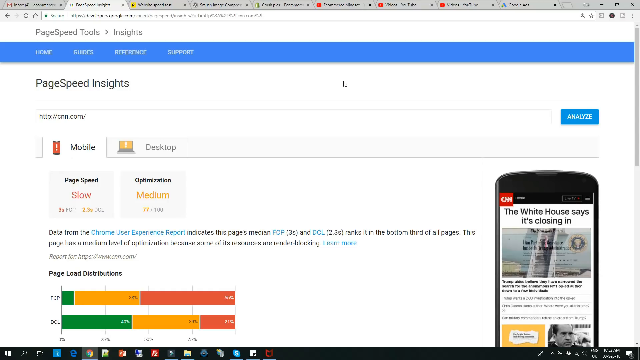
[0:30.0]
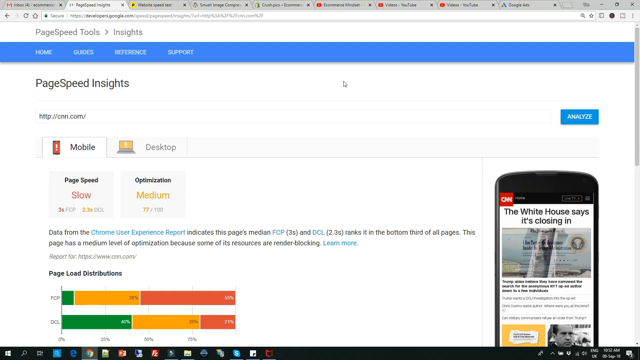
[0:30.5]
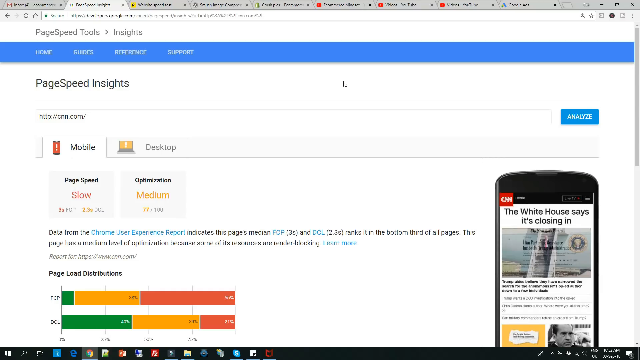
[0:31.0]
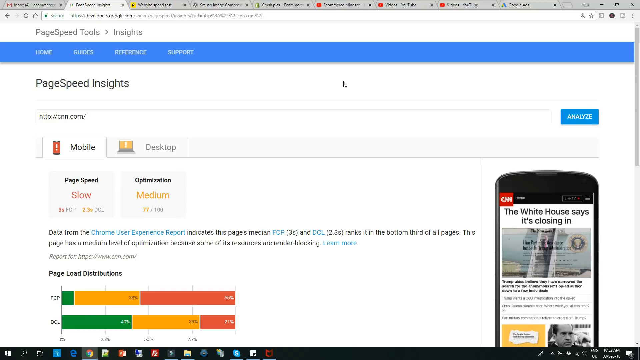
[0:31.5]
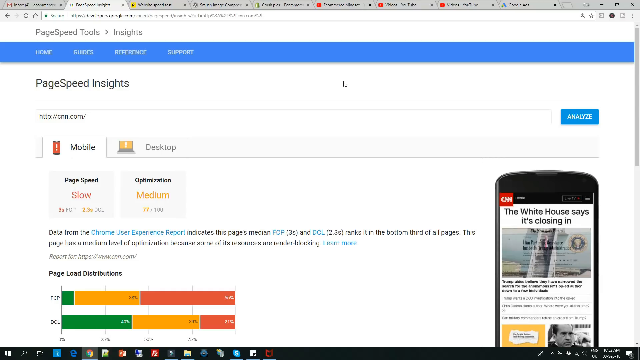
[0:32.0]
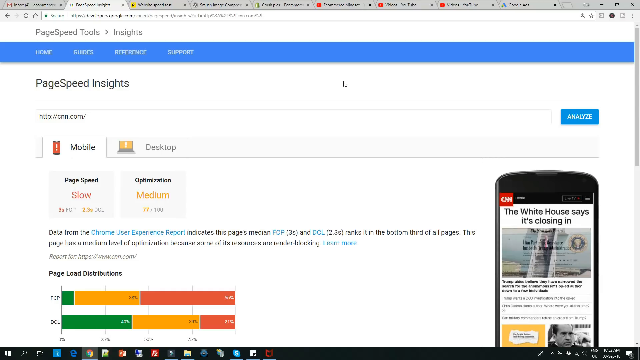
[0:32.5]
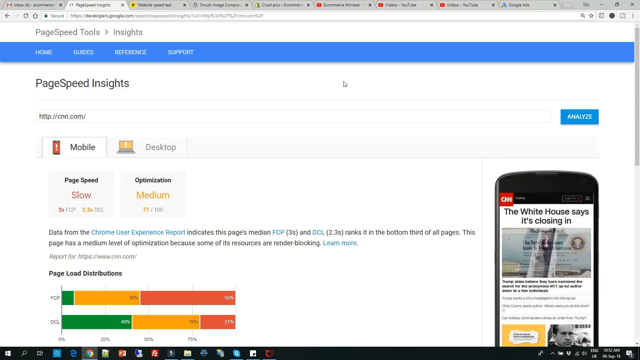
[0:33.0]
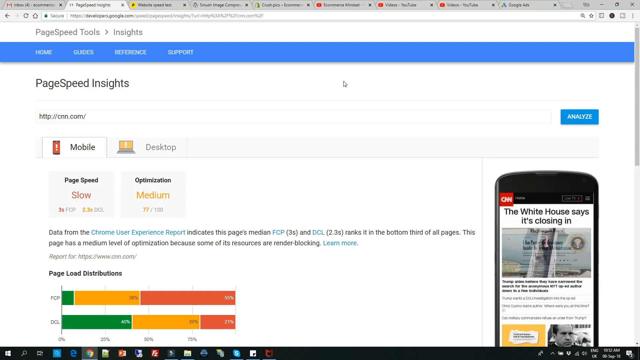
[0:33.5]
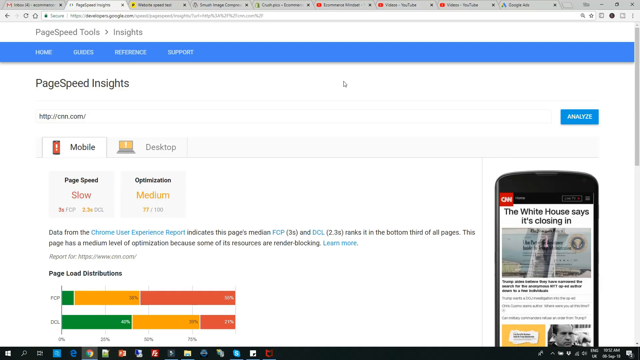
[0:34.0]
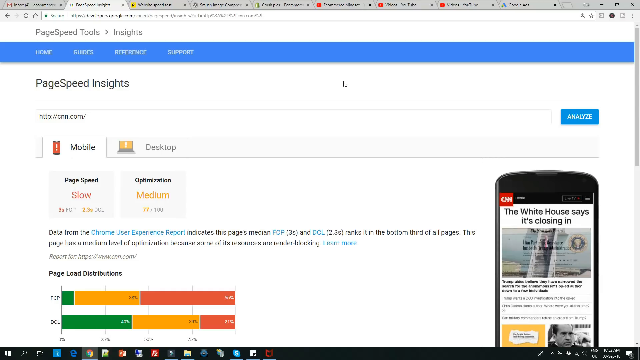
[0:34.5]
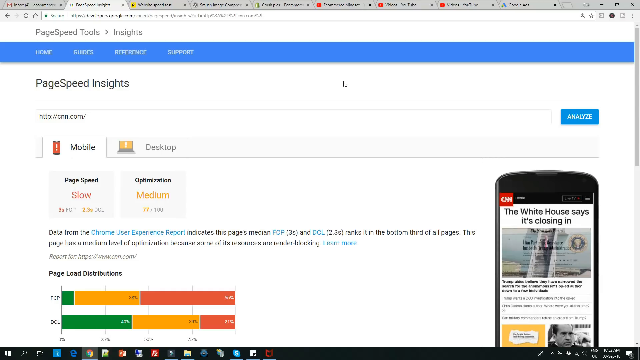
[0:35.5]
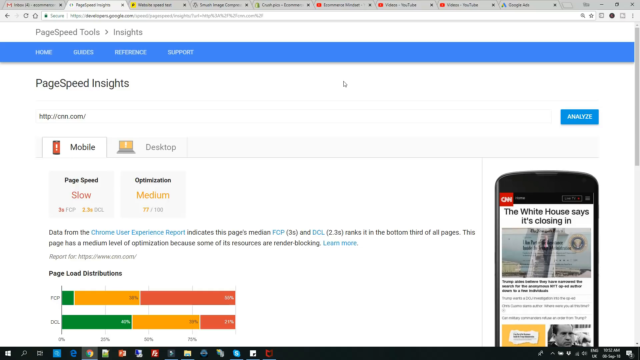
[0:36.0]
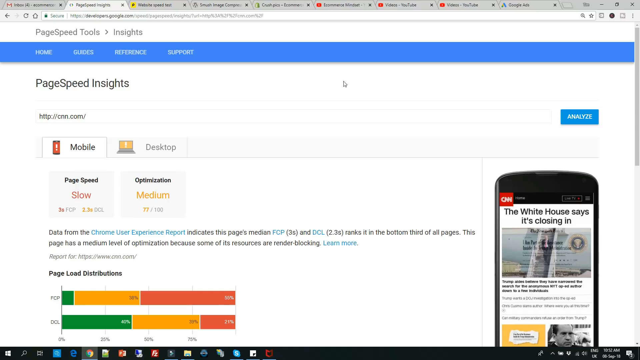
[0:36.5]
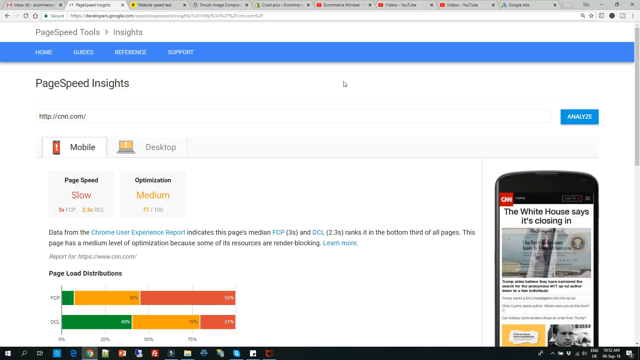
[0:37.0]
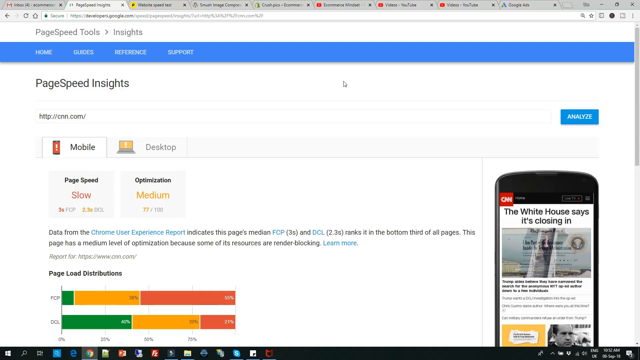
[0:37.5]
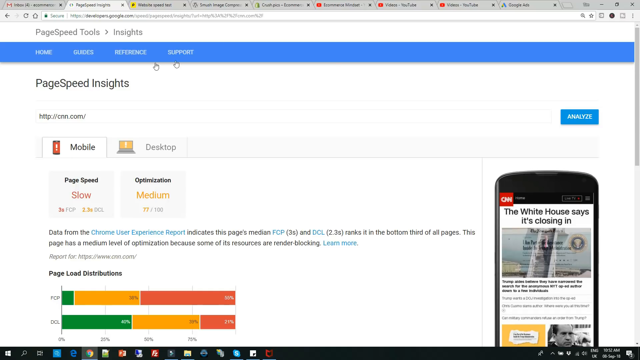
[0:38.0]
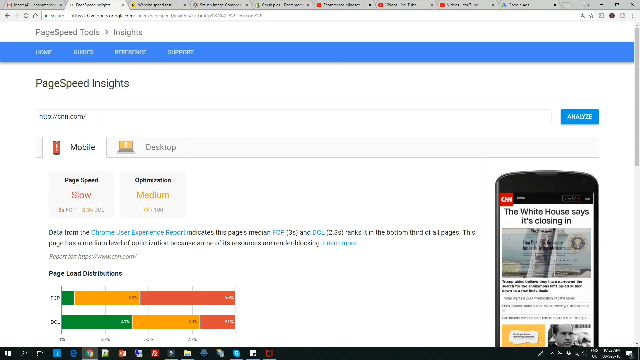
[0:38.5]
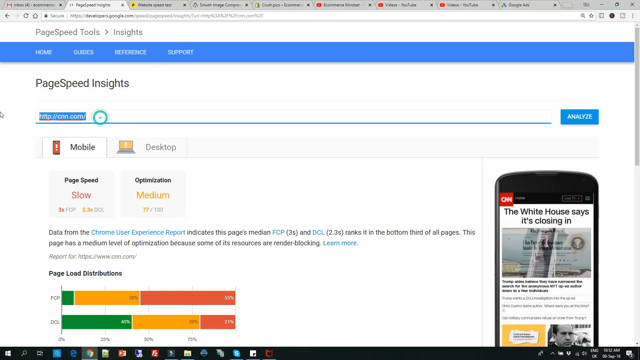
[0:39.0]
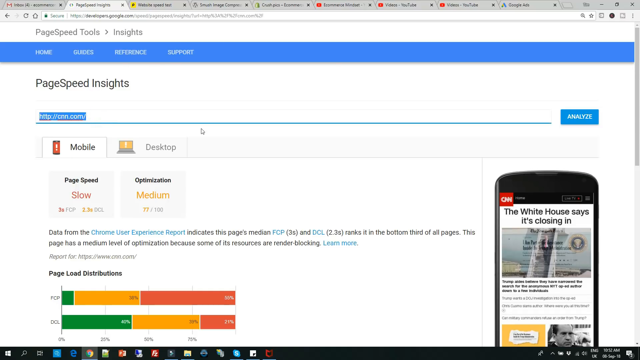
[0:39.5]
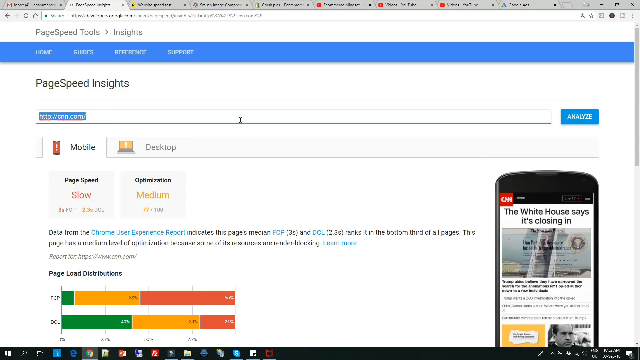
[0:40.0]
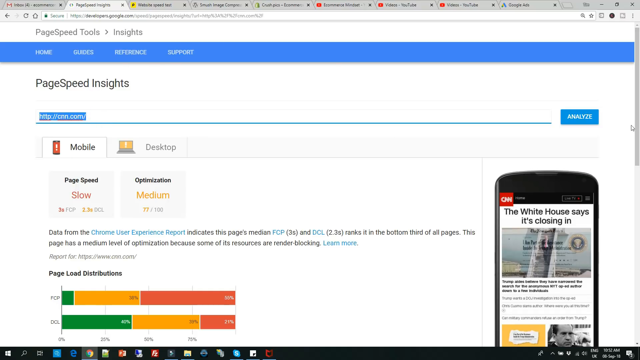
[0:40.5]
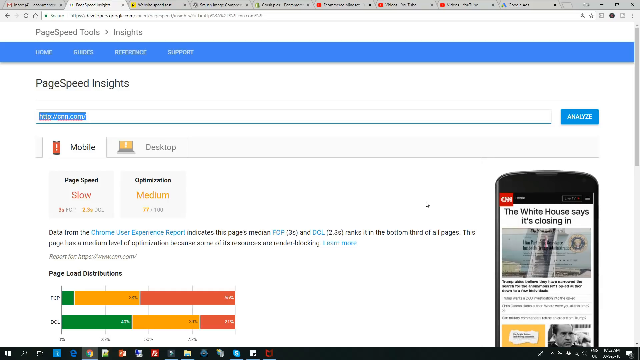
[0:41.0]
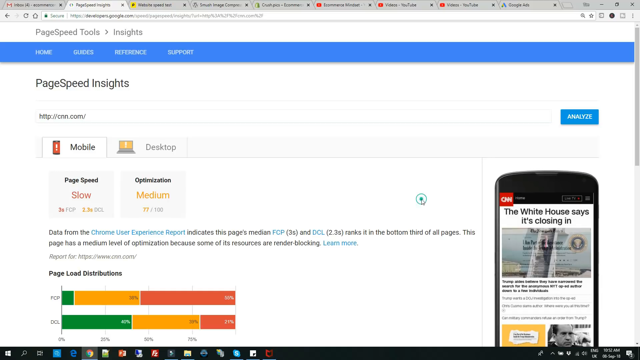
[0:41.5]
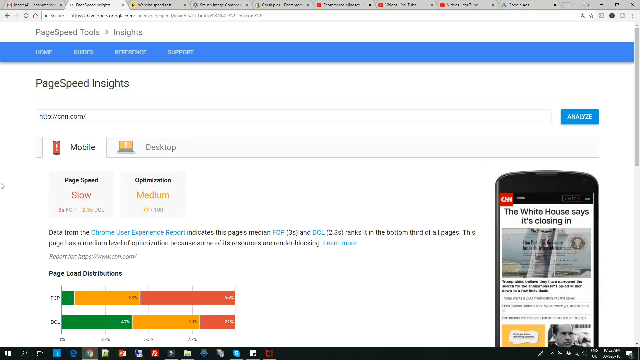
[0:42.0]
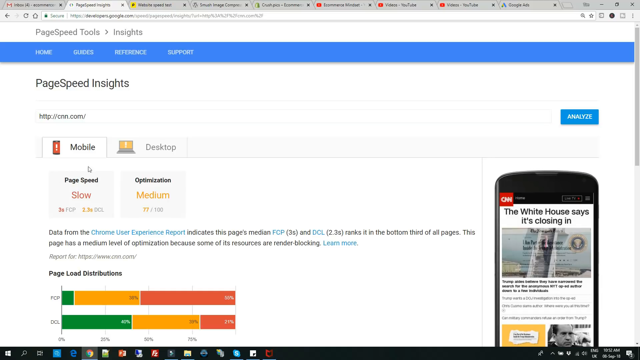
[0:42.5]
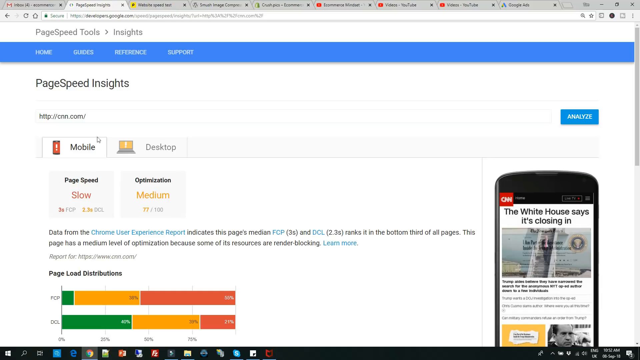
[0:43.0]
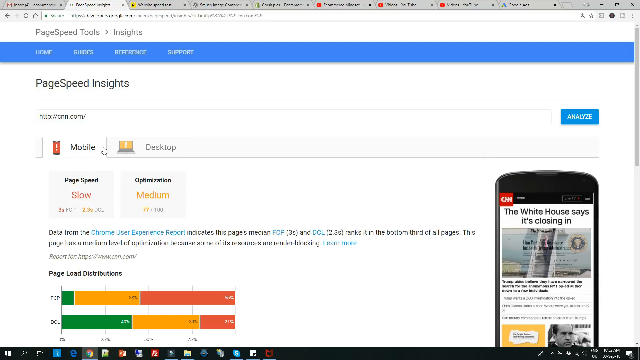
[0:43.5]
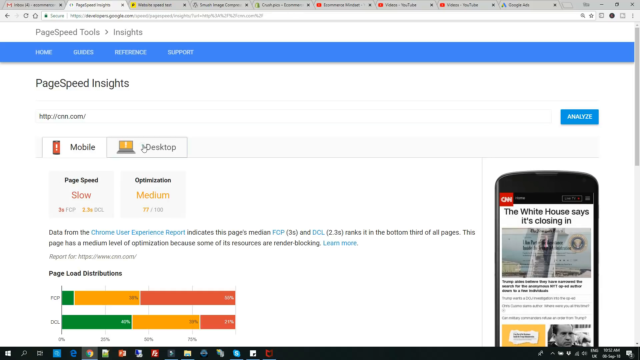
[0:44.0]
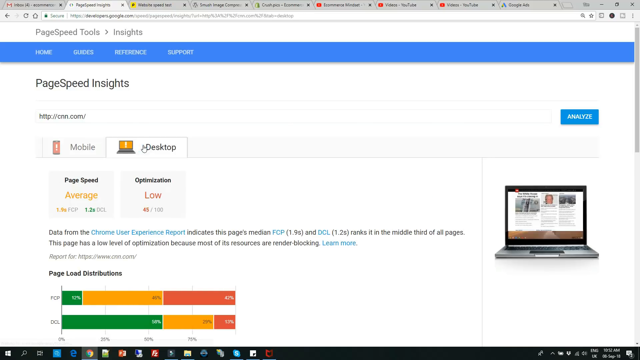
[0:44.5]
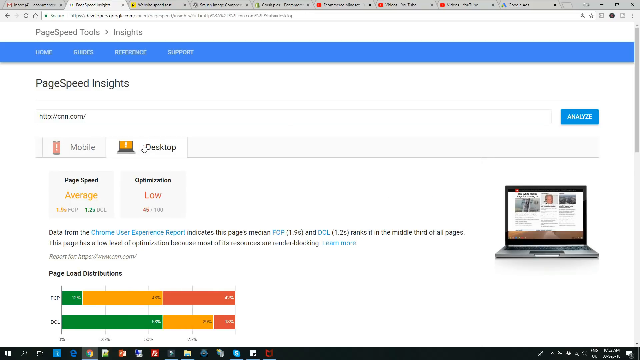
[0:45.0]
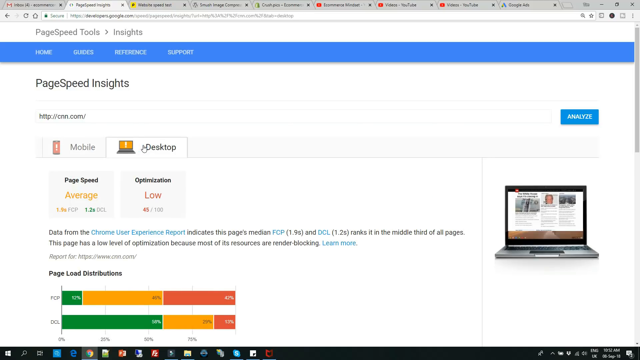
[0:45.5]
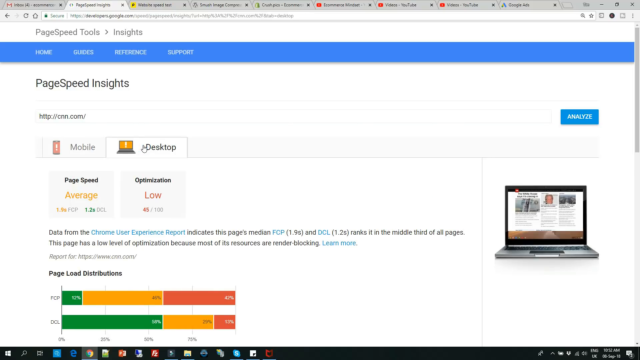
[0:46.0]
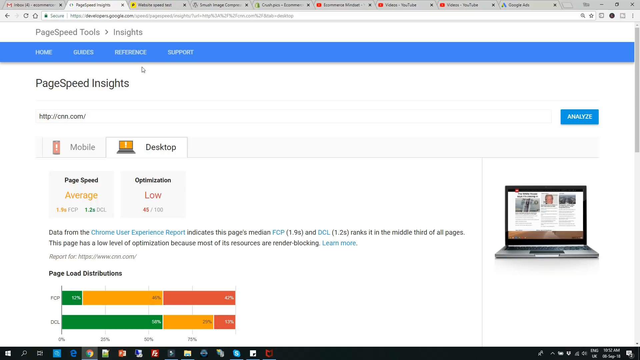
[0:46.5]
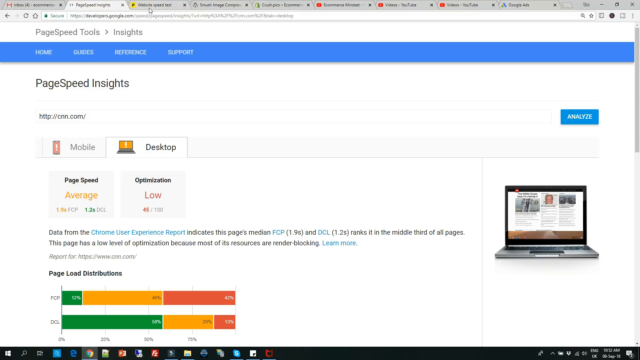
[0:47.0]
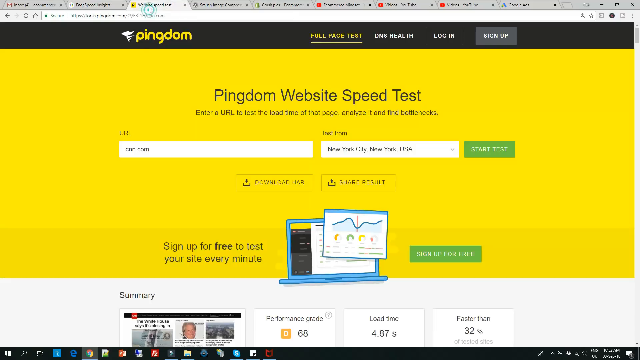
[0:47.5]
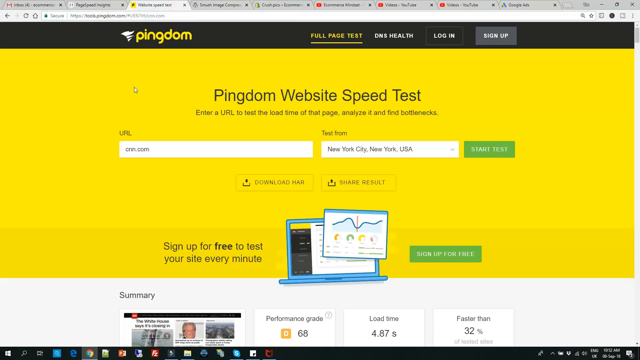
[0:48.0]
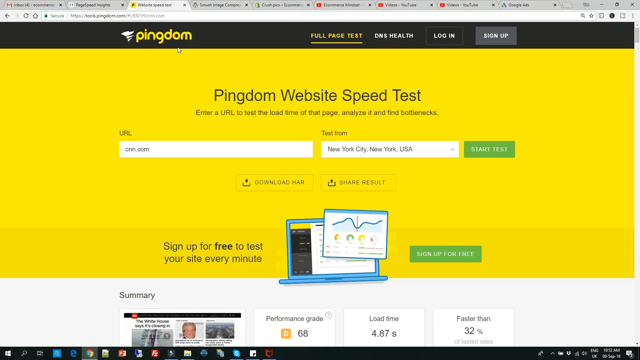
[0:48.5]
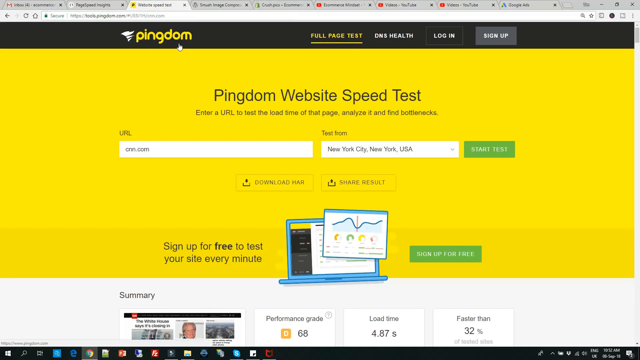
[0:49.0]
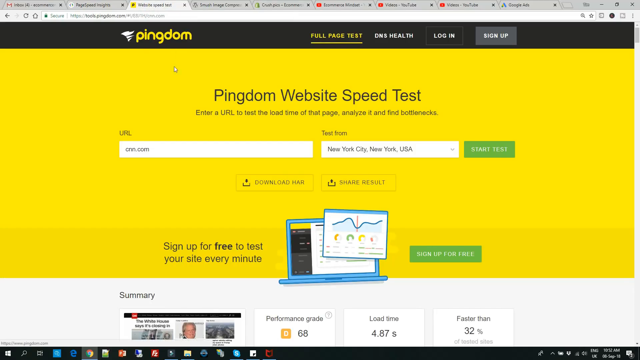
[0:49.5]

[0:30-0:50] The page reads "PageSpeedTools, Insights, PageSpeed, PageSpeed, Insights, CNN.com, Analyze", with mobile and desktop options below. For mobile it says the page is slow and optimization is medium. Many tabs are open on the computer, and there is a cell phone image in the corner. Text begins "the White House is closing in", but the rest cannot be read. There is also a section labeled "page load distributions". The cnn.com entry is highlighted. The desktop results then appear: page speed for desktop is average, but optimization is low. Another tab opens to the Pingdom site, titled "Pingdom website speed test", another site for checking website speed.